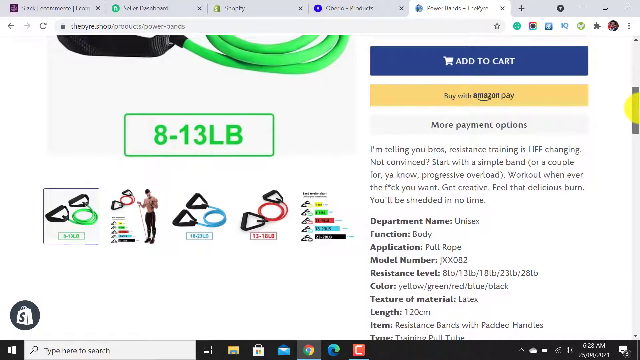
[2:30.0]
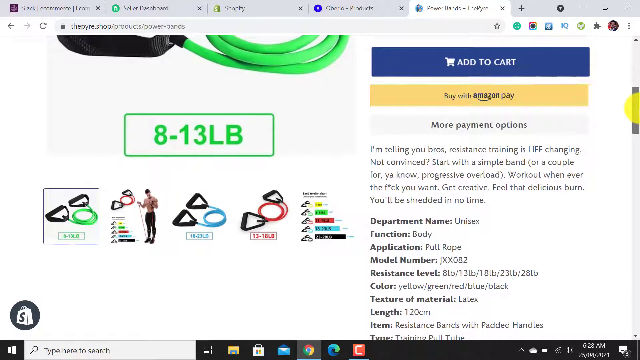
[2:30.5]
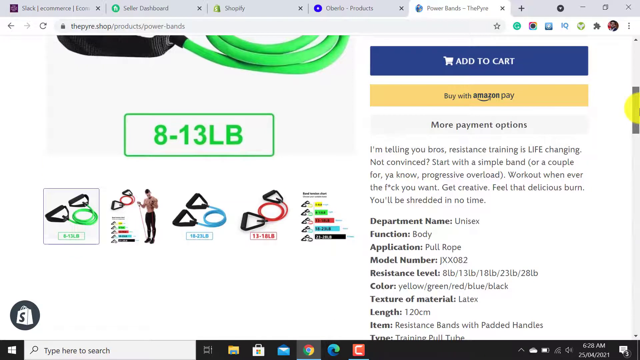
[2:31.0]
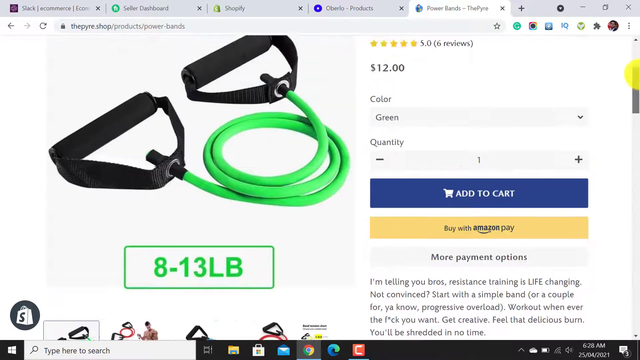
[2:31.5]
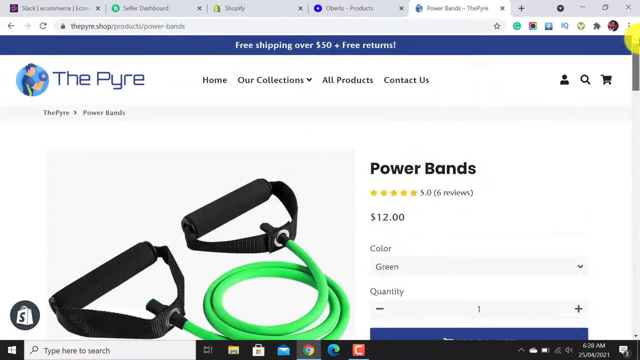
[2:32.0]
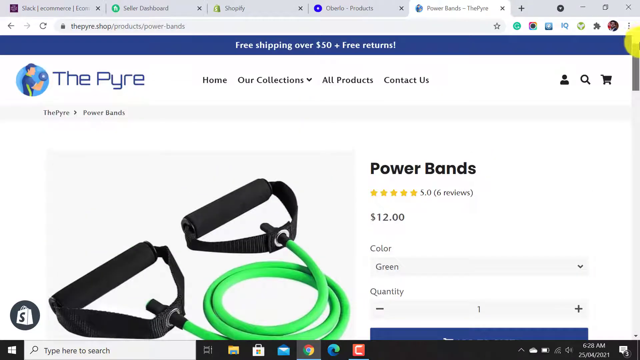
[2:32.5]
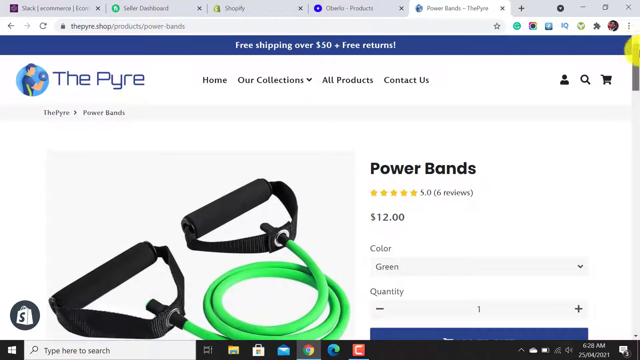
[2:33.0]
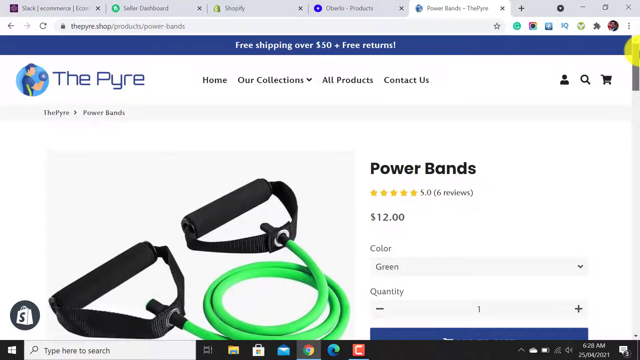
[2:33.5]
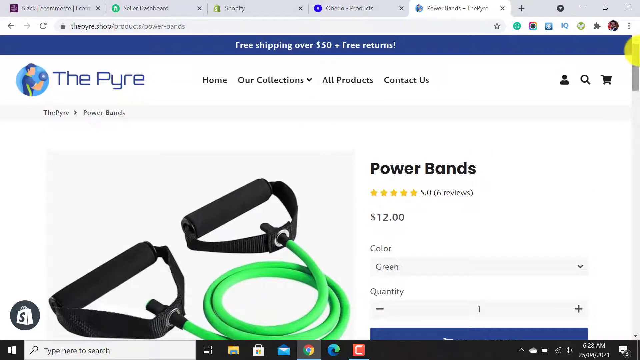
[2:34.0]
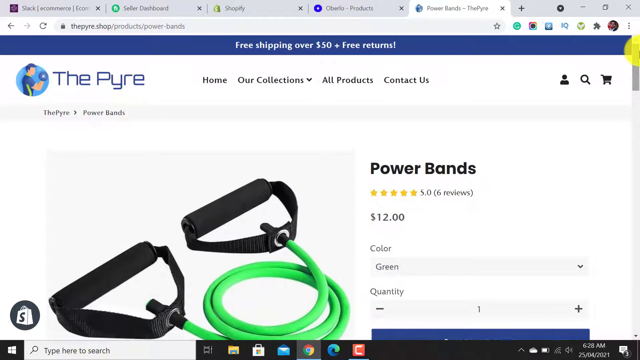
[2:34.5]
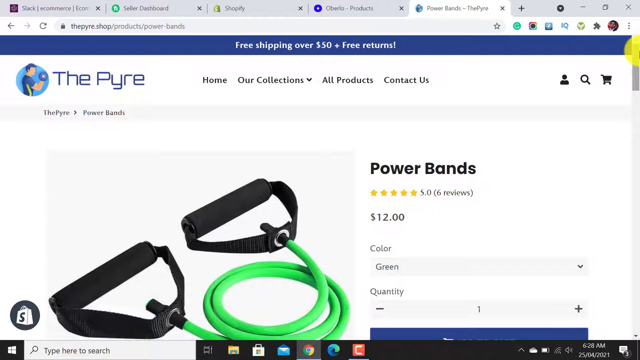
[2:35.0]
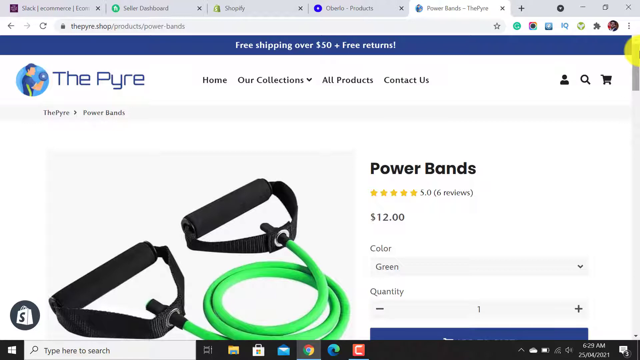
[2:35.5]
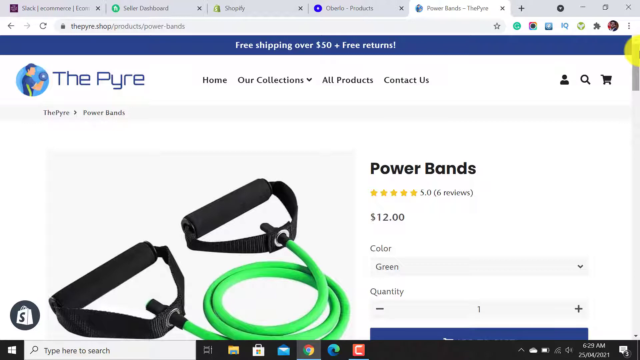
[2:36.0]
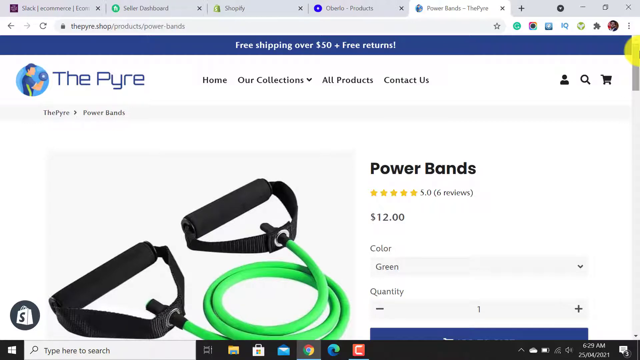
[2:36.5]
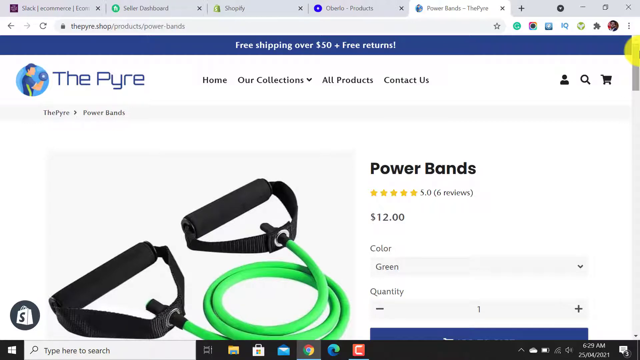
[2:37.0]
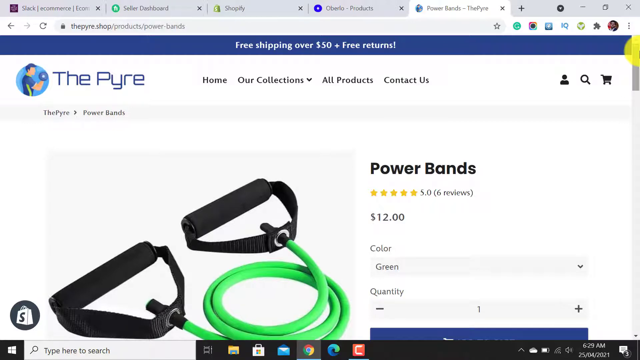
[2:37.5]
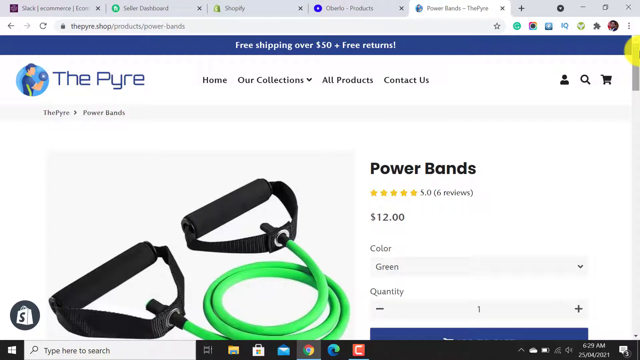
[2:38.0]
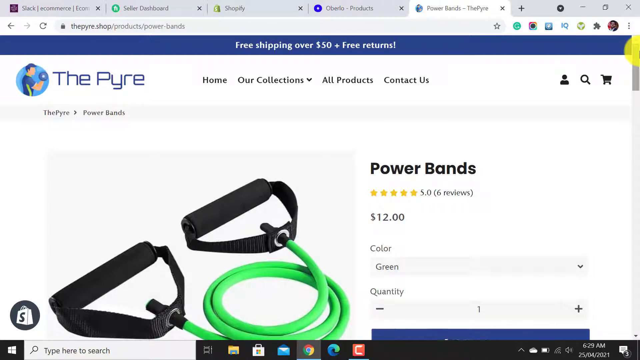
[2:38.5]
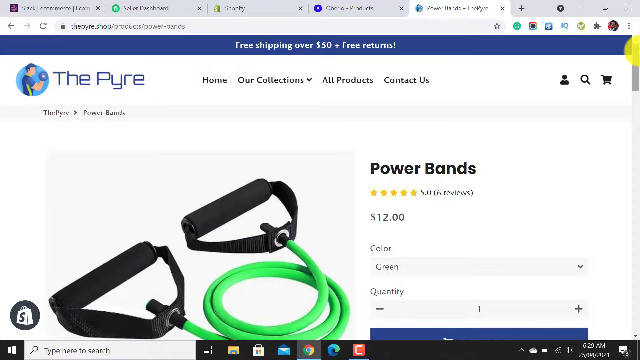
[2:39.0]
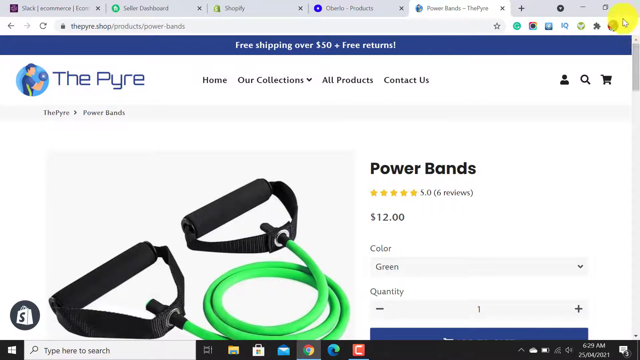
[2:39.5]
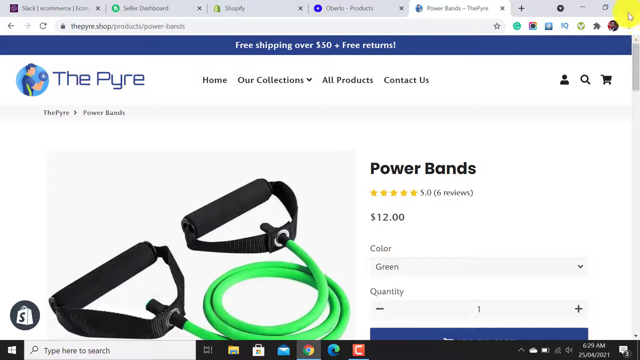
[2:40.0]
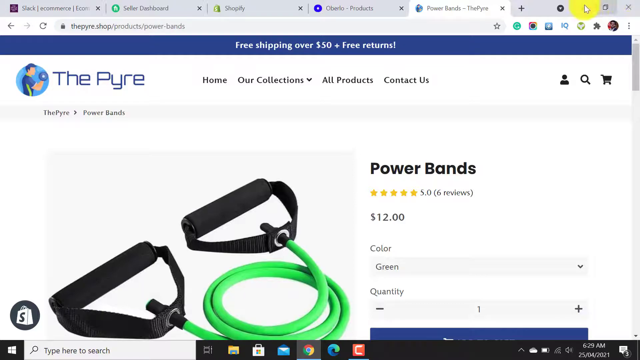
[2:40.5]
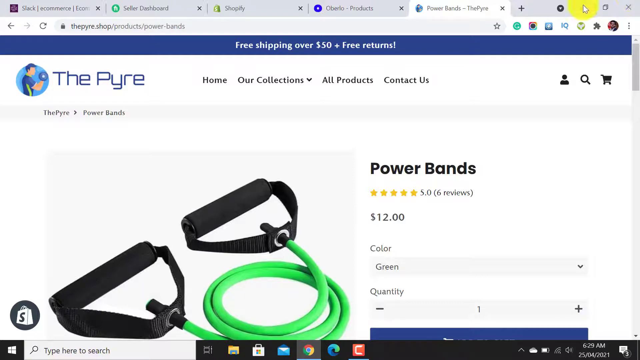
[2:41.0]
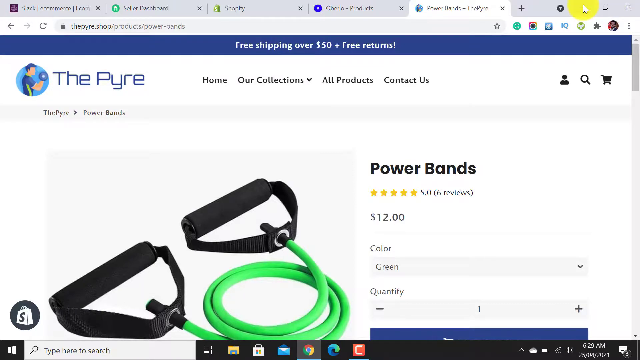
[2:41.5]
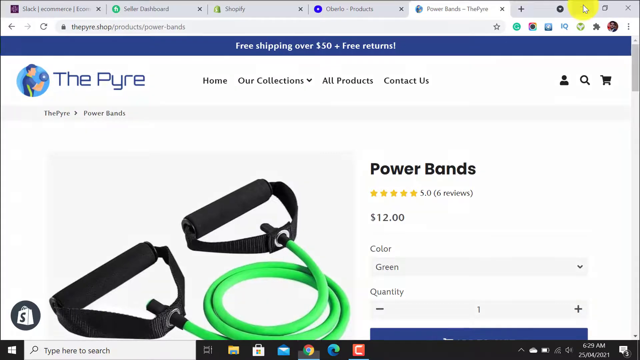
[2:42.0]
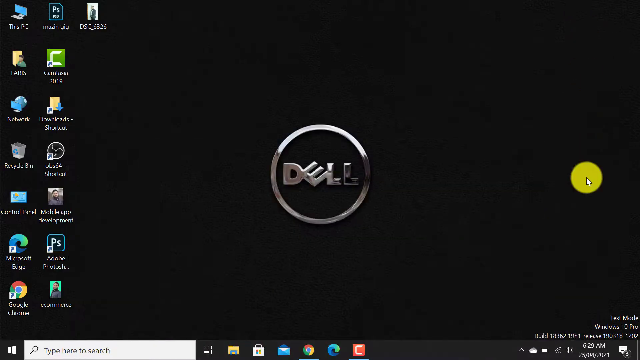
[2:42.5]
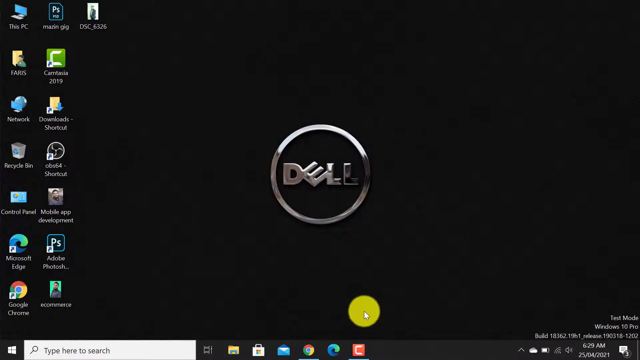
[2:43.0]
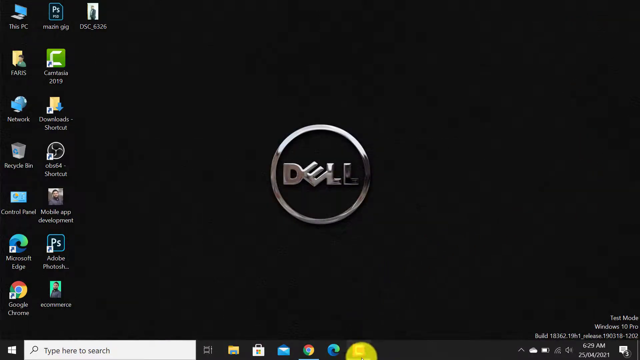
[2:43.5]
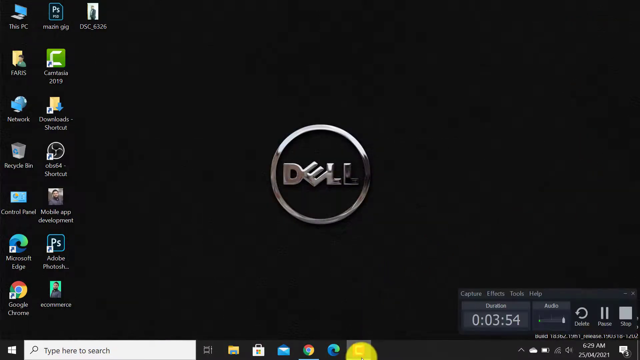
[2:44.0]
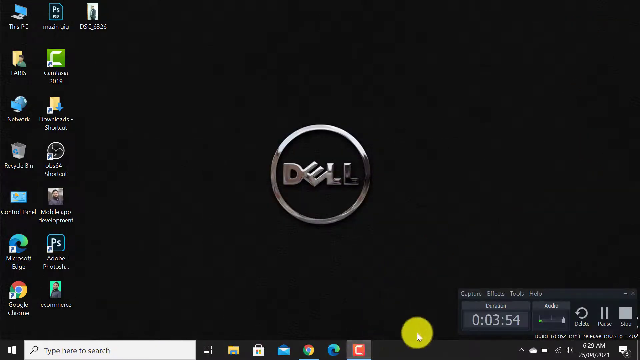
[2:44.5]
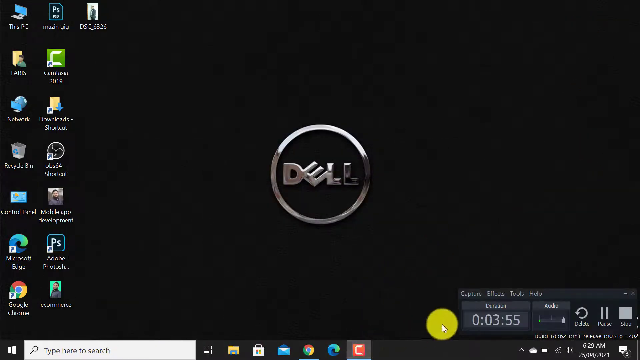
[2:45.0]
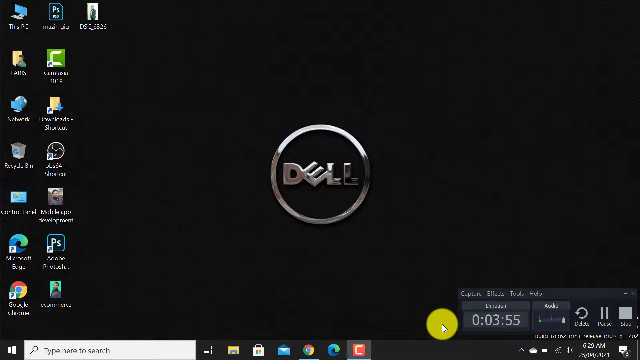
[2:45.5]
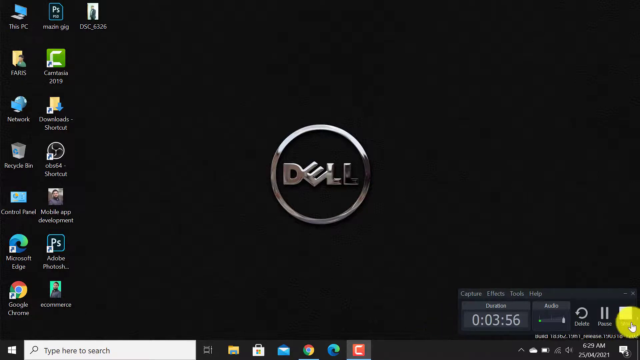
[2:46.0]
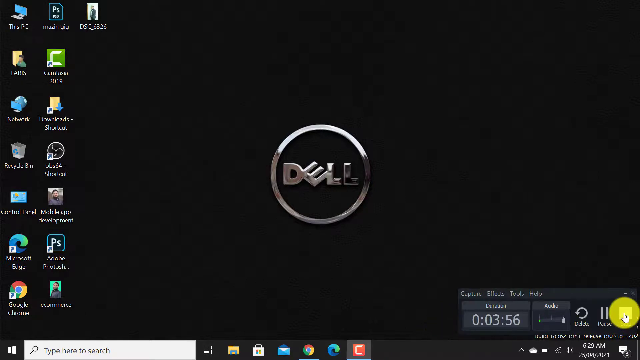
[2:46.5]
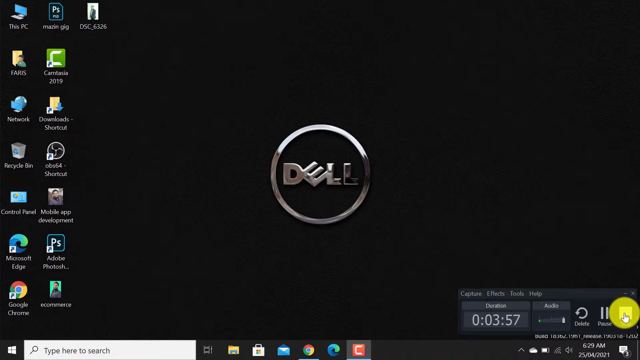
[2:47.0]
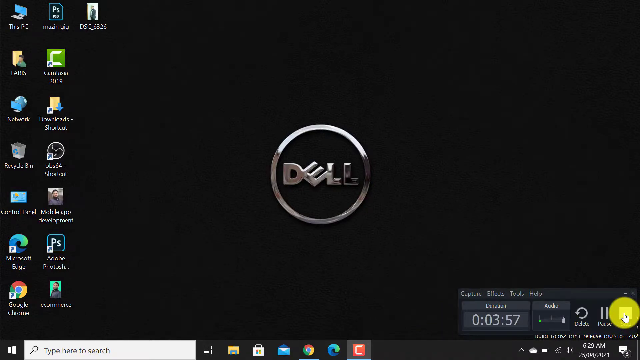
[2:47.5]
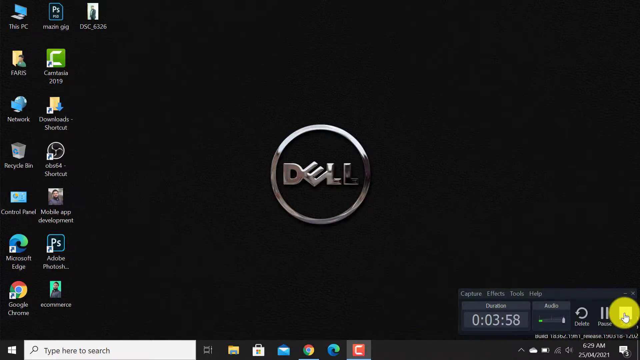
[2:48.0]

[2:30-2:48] The product page with the imported reviews is shown, with options to add to cart or buy with Amazon Pay. Add to Cart is clicked and sort of shakes as though selected. The product is a resistance band; below it the band's weight is shown as 8 to 13 pounds, followed by a picture of the band and a person using the band. Another band is blue at 15 to 23 pounds, and a band at 13 to 18 pounds is red. A small graph shows the progression and color of the bands by weight.